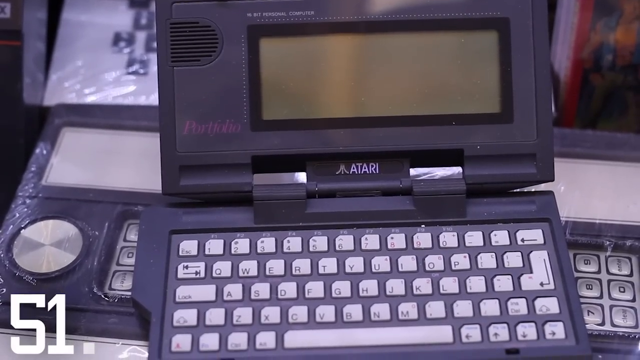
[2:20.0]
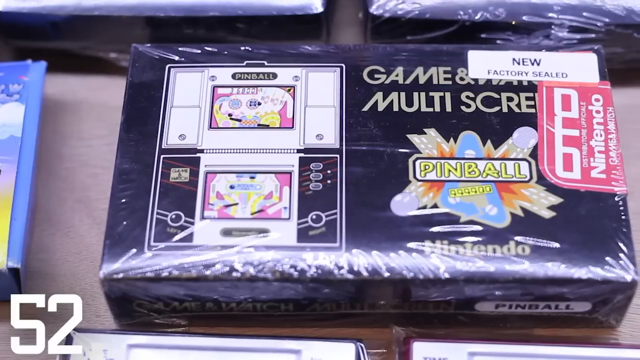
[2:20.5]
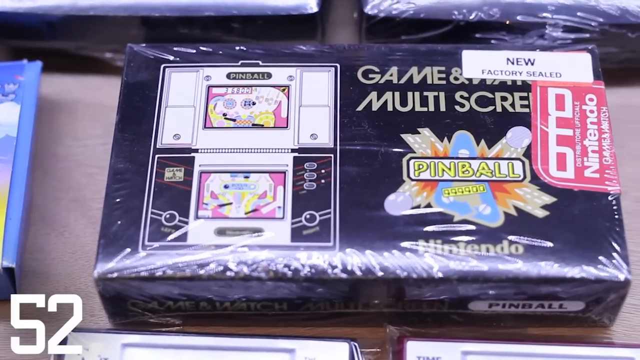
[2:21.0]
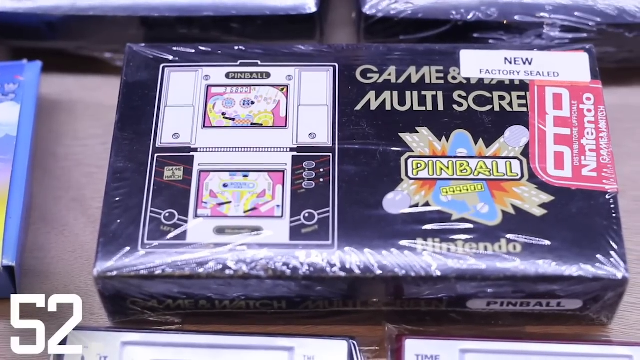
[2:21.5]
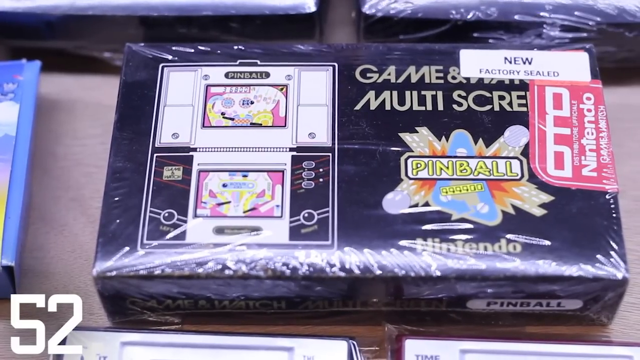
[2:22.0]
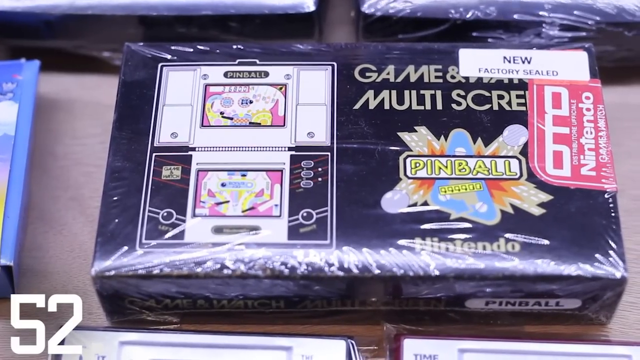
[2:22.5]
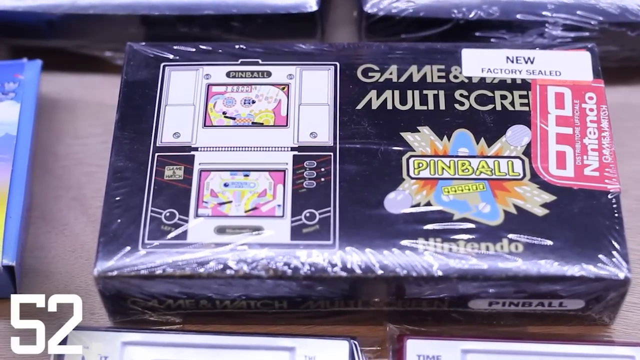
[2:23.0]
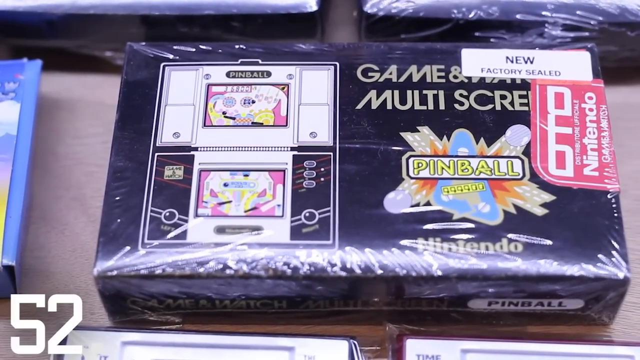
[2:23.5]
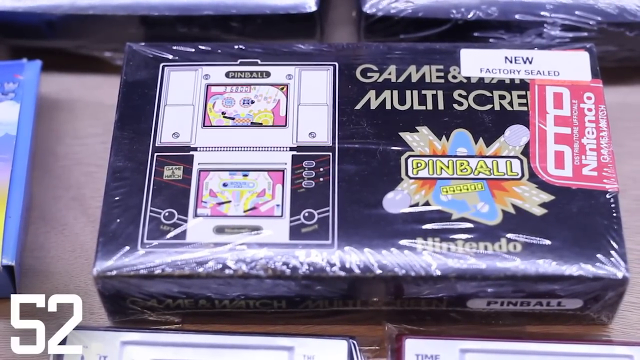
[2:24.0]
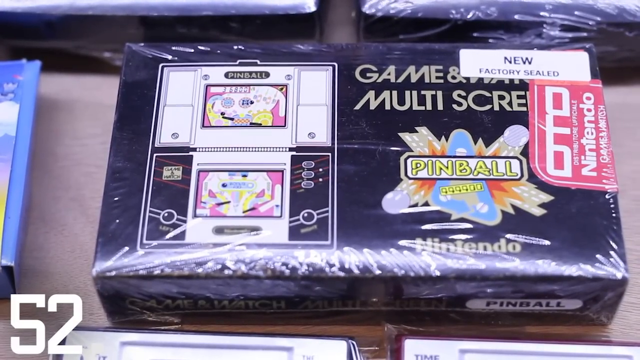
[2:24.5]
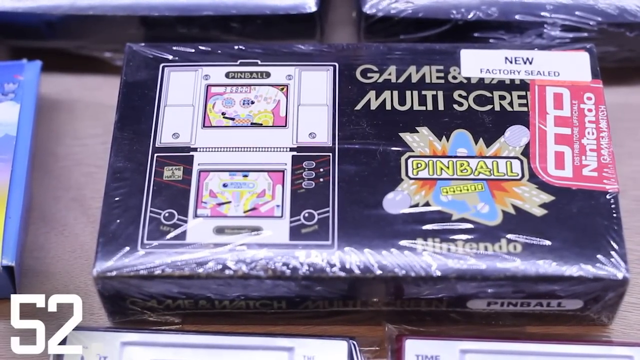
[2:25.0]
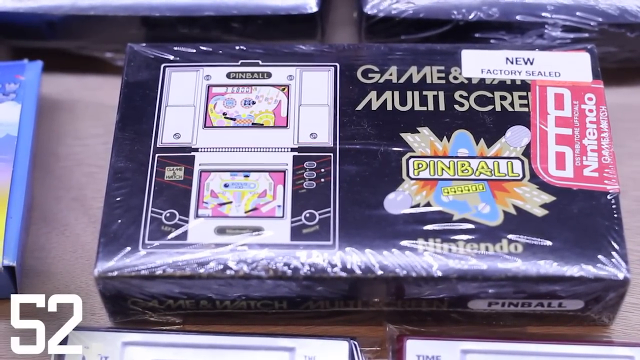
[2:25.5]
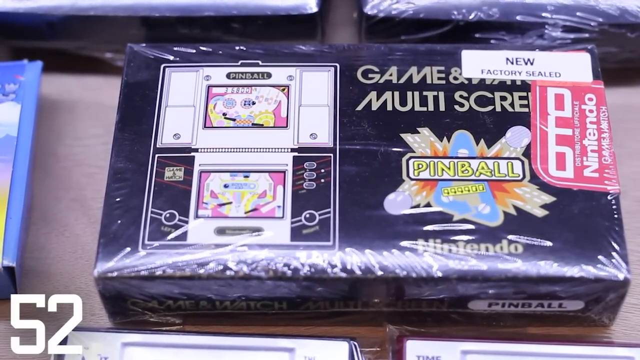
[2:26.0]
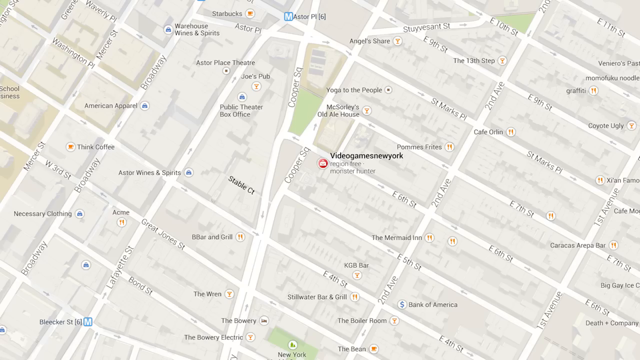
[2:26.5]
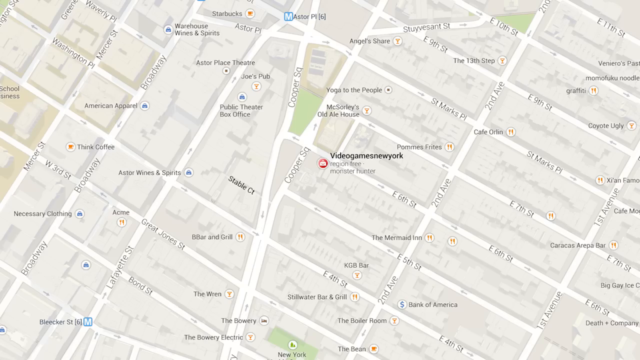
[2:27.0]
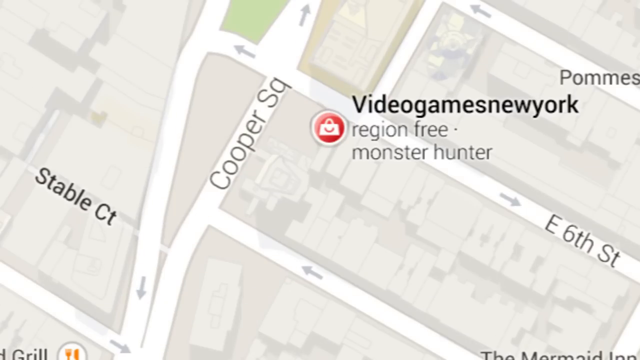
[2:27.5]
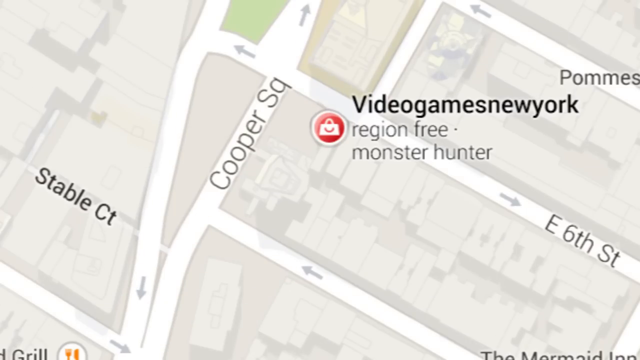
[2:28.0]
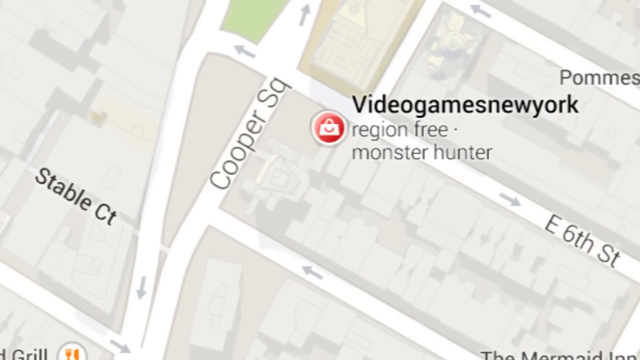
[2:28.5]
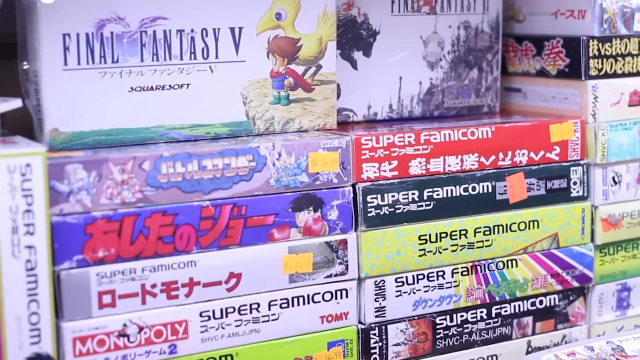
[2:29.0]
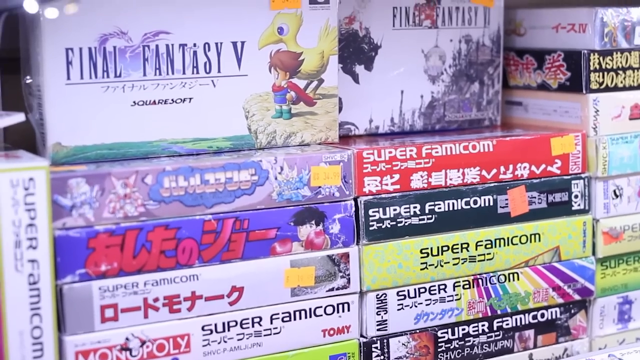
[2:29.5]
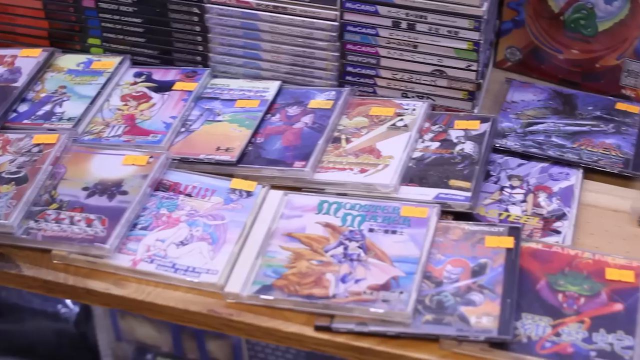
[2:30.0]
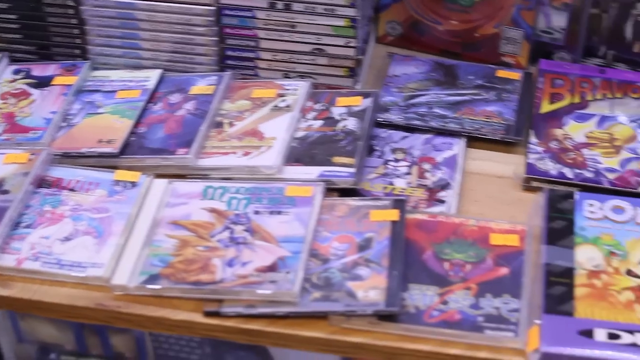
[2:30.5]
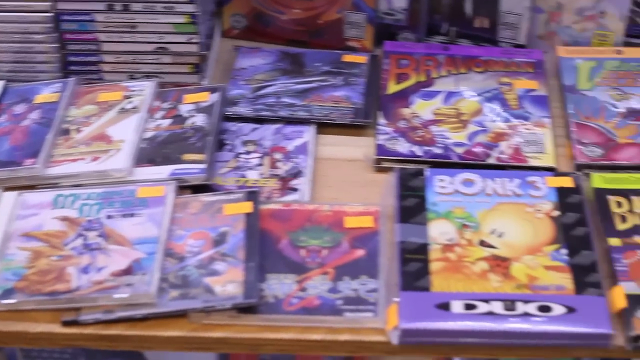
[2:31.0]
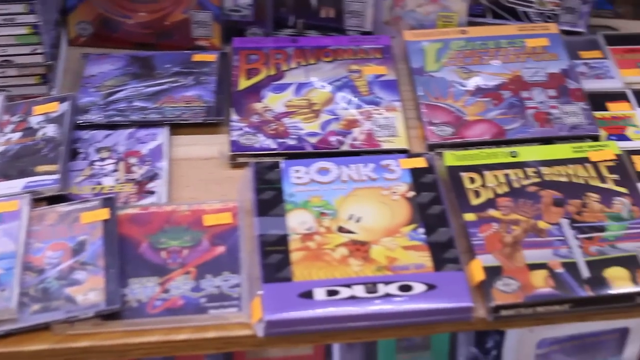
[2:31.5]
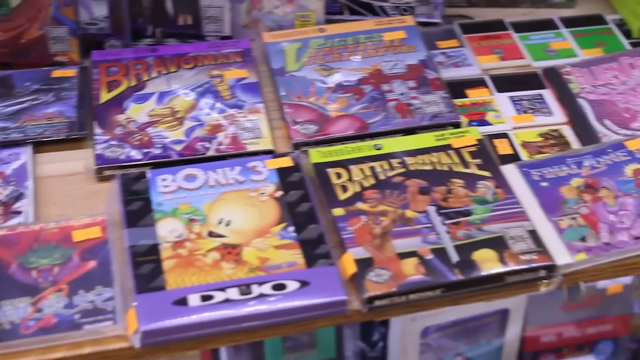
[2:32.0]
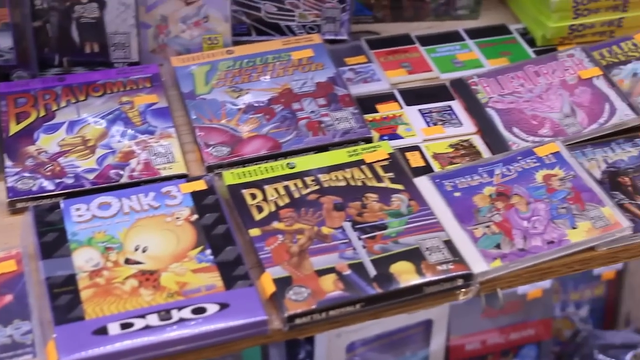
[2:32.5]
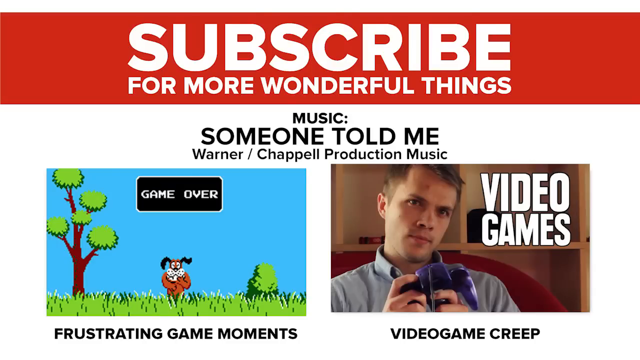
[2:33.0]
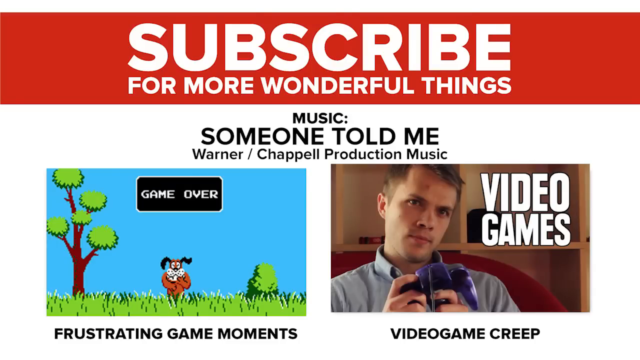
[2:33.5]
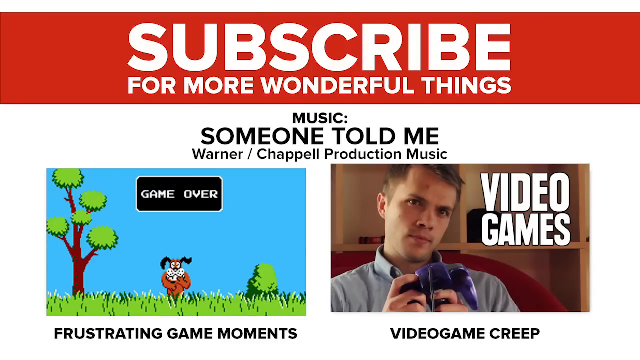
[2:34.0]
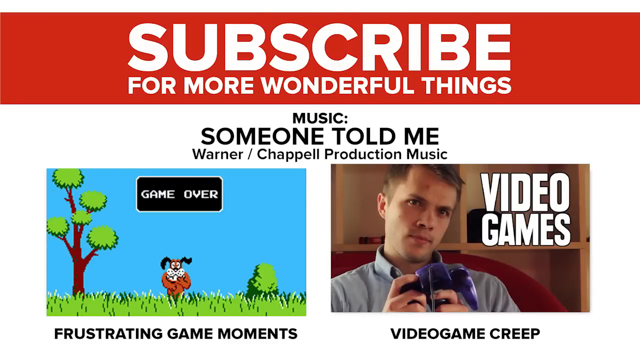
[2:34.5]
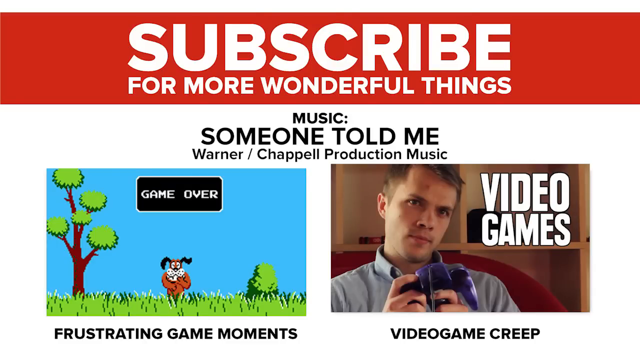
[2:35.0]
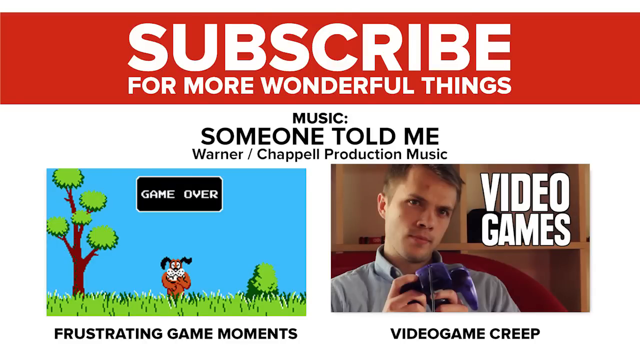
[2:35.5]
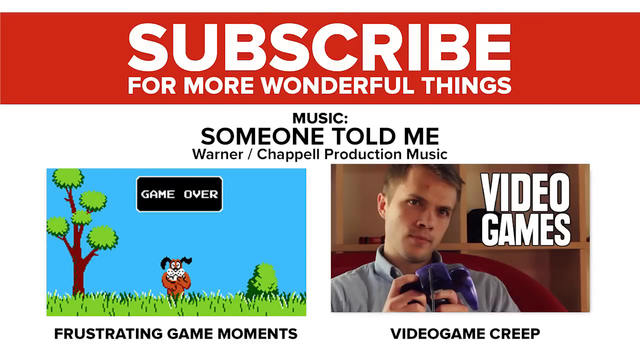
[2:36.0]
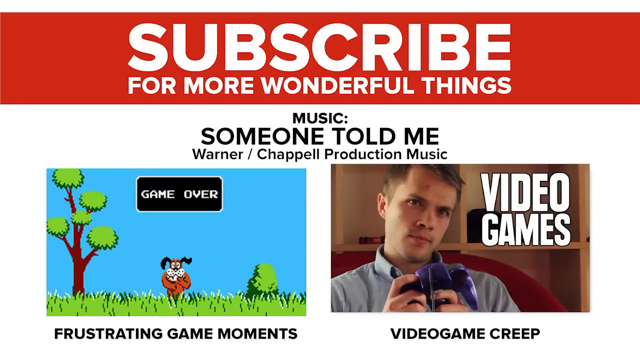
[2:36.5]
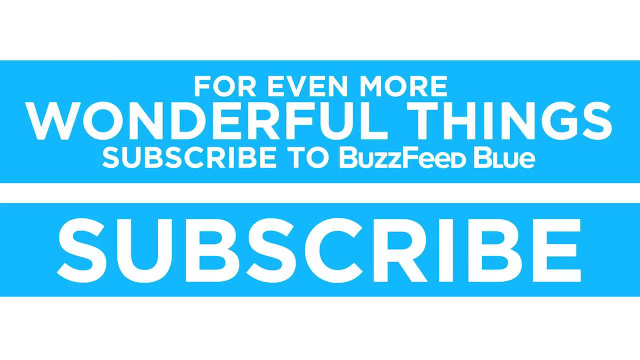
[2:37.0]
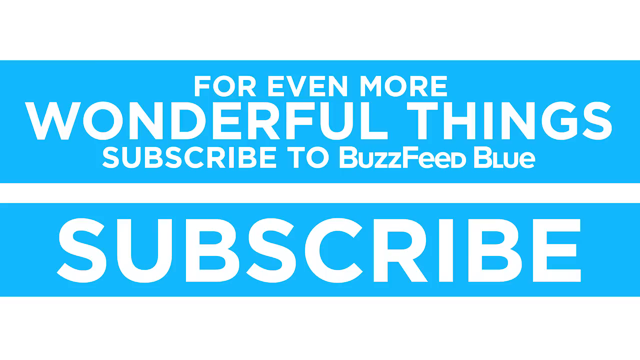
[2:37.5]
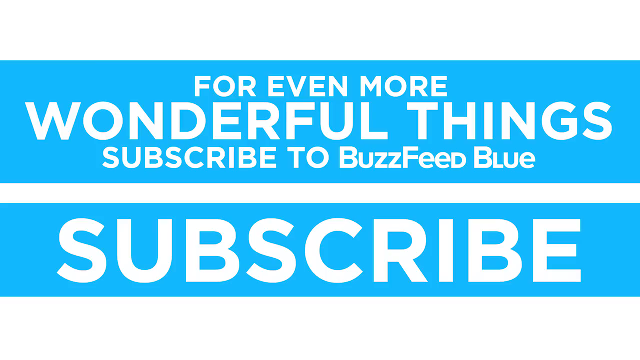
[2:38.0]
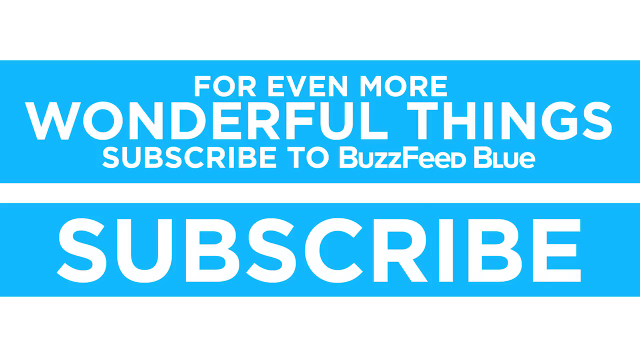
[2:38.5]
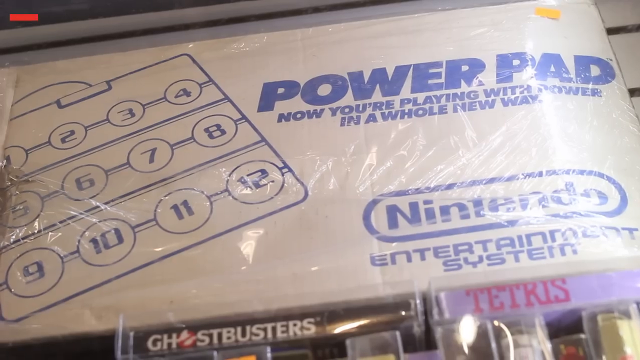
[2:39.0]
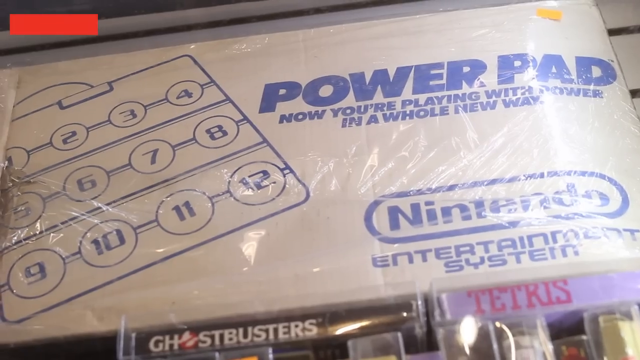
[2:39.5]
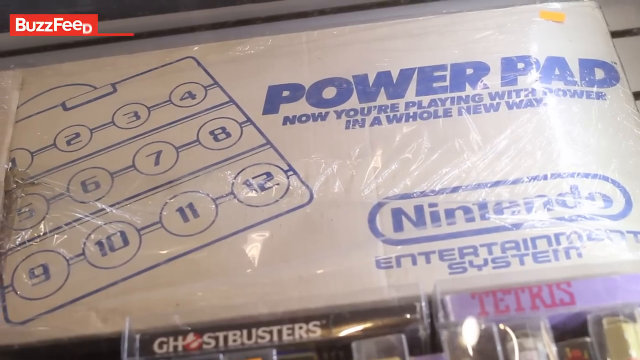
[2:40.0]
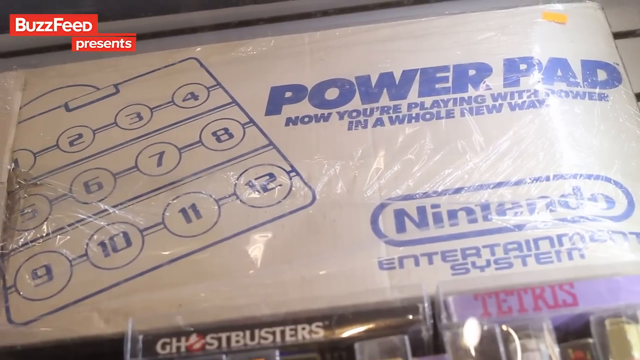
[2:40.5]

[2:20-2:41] Some kind of Atari machine with a keyboard and an old monochrome or LED display is shown, followed by some kind of handheld pinball game, factory new and sealed in cellophane. A map shows the region where the Video Games New York store is. A bunch of Super Famicom cartridges appear in their original boxes with Japanese writing all over them, with a Final Fantasy V box above those and a Final Fantasy VI box above that. A table holds all kinds of video games, CDs and cartridges; one cartridge says "Bonk 3," another "Battle Royale," another "bravo man," and another "final zone two." At the end of the video, text reads "subscribe for more wonderful things," "music, someone told me by Warner Chappell production music," "for even more wonderful things," "subscribe to BuzzFeed Blue" and "Subscribe." Then a power pad is shown, with "Now you're playing with power in a whole new way" and "Nintendo Entertainment System" on the box.